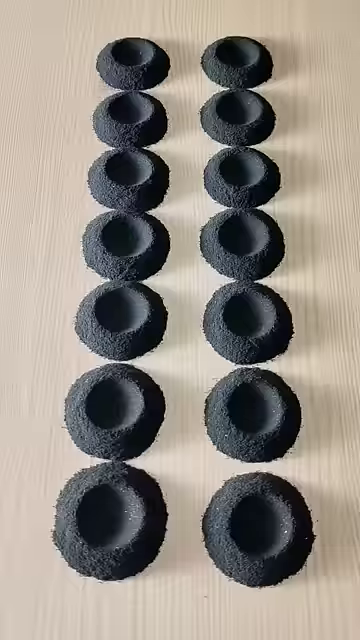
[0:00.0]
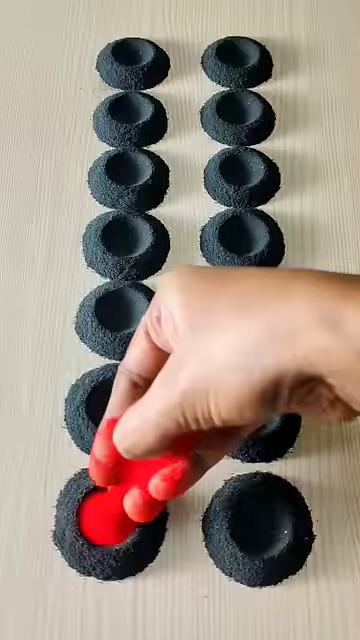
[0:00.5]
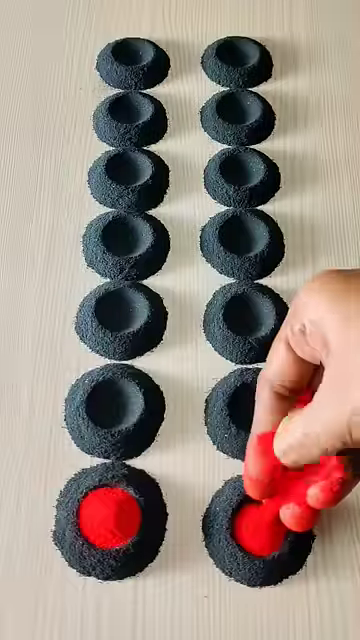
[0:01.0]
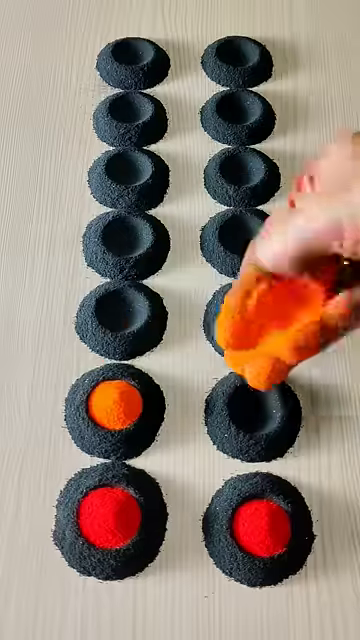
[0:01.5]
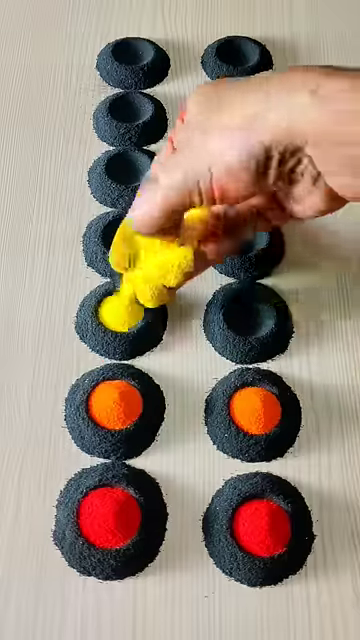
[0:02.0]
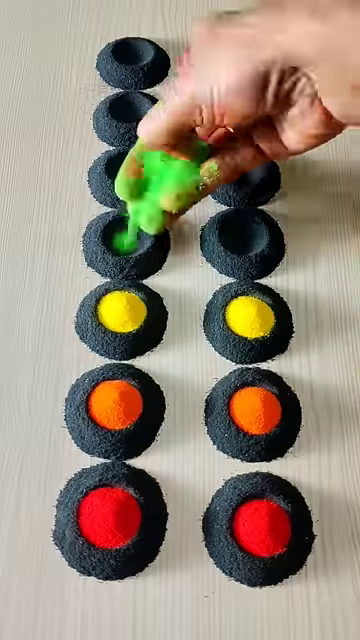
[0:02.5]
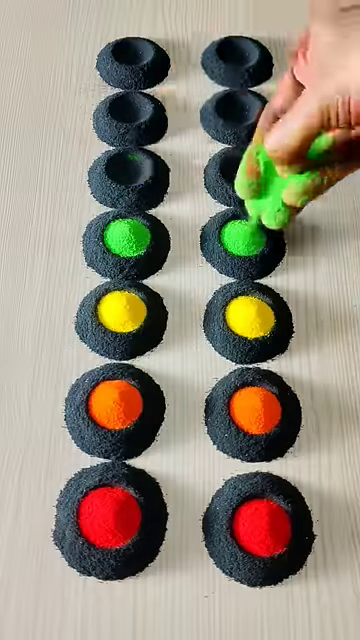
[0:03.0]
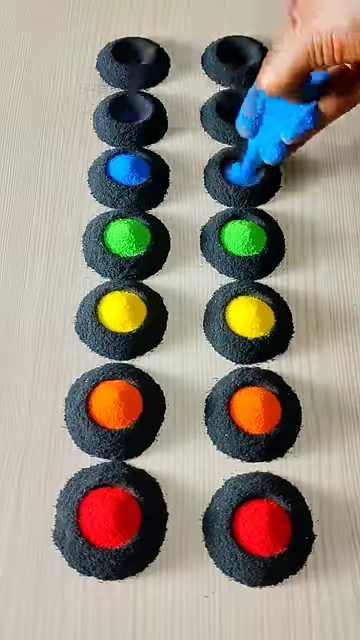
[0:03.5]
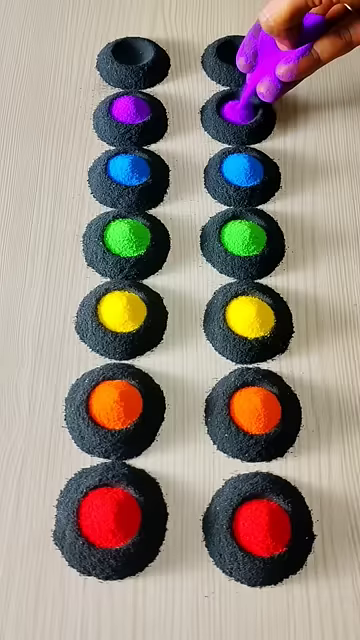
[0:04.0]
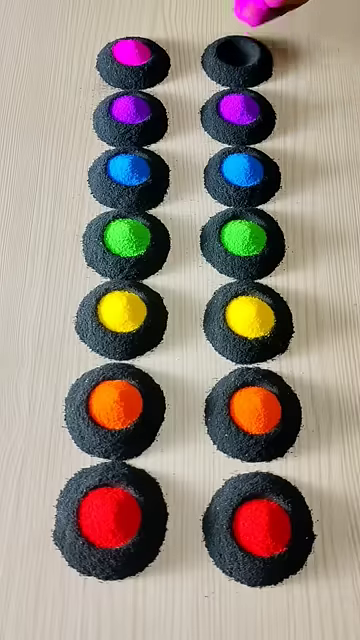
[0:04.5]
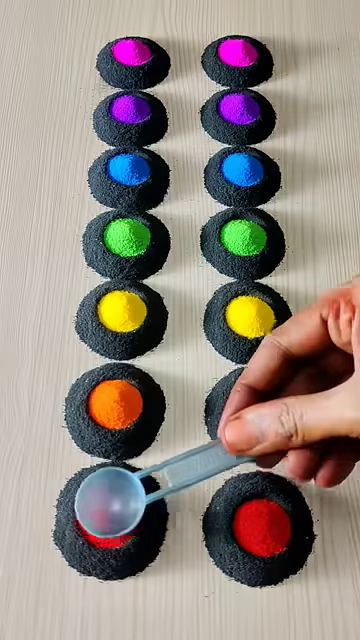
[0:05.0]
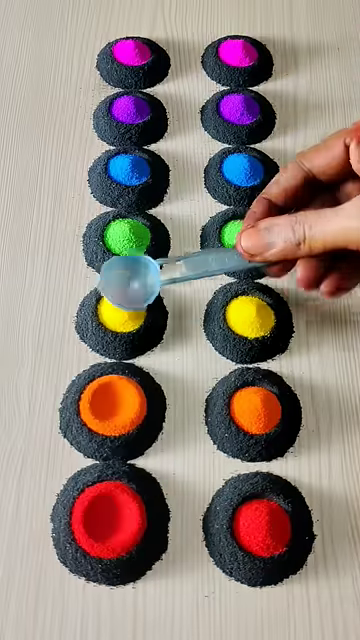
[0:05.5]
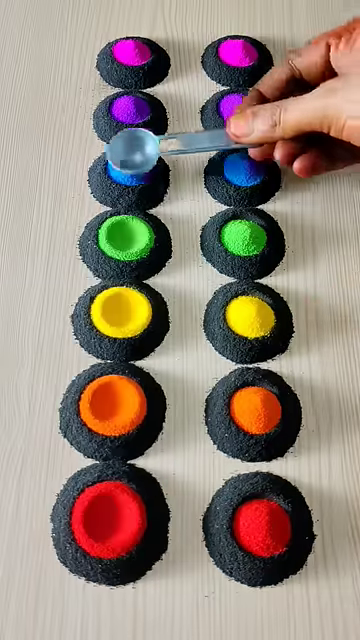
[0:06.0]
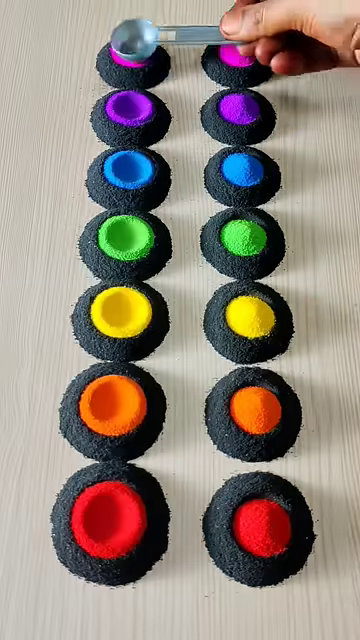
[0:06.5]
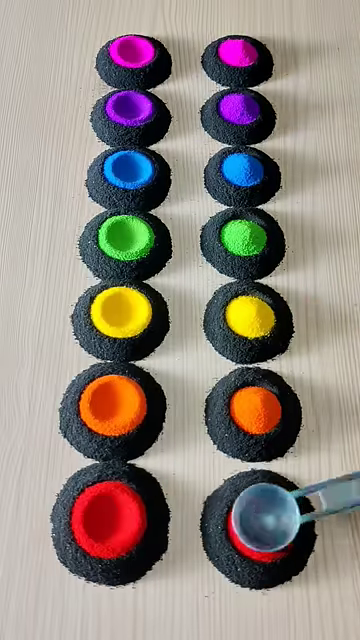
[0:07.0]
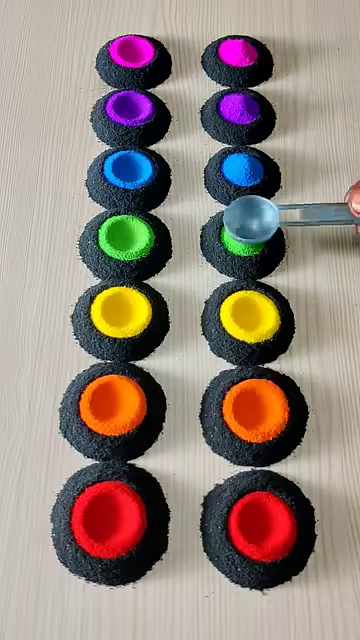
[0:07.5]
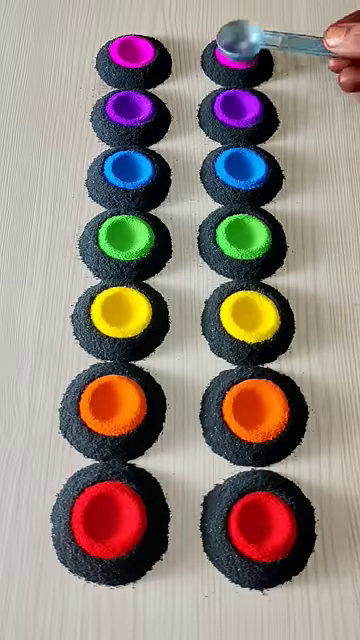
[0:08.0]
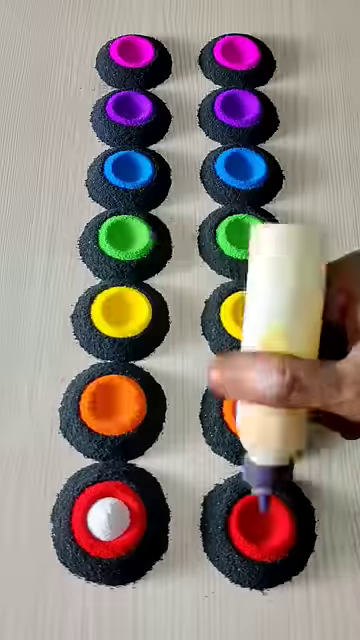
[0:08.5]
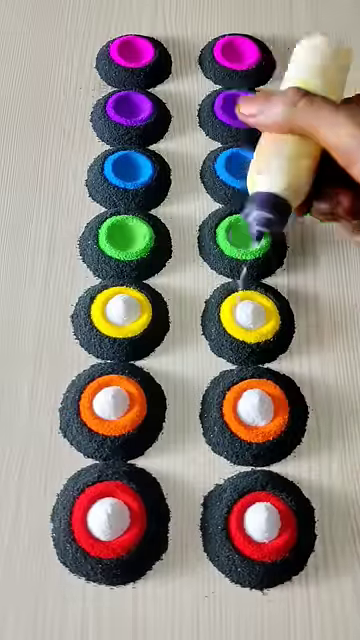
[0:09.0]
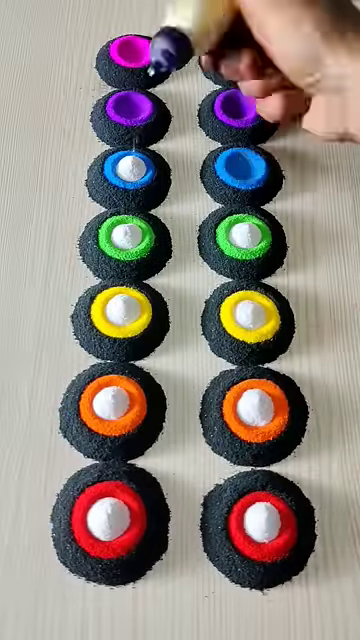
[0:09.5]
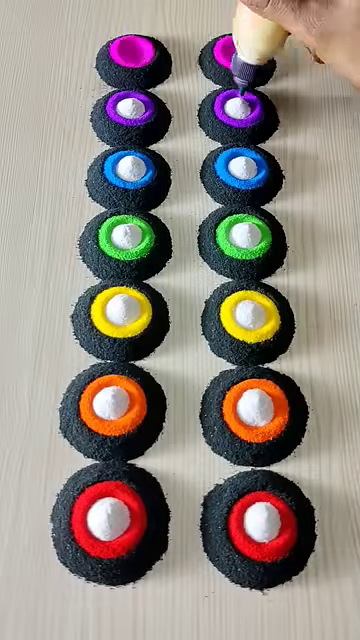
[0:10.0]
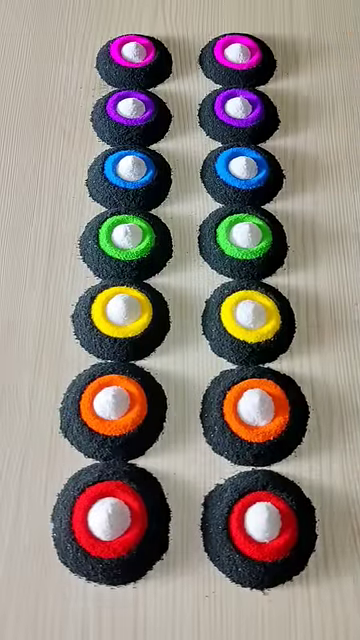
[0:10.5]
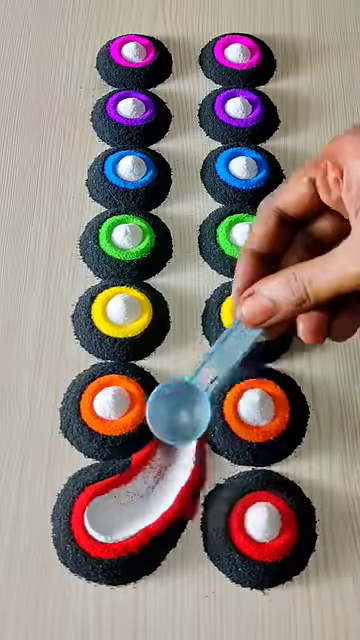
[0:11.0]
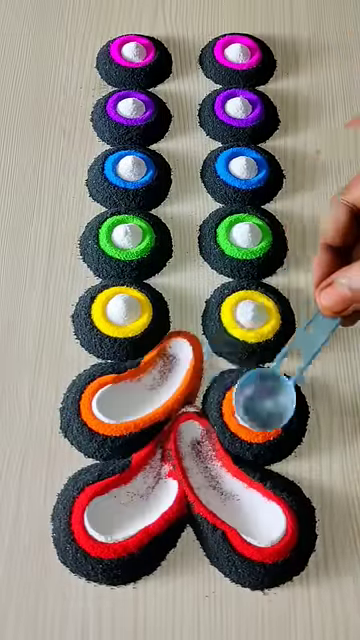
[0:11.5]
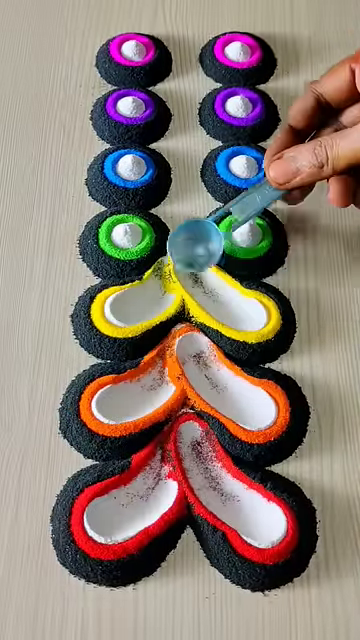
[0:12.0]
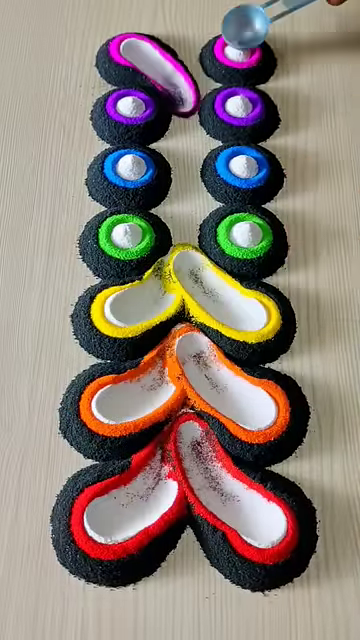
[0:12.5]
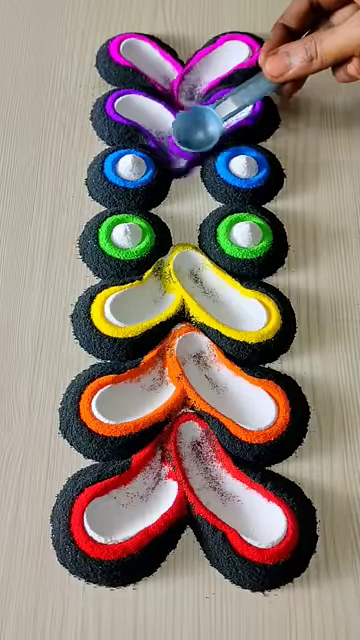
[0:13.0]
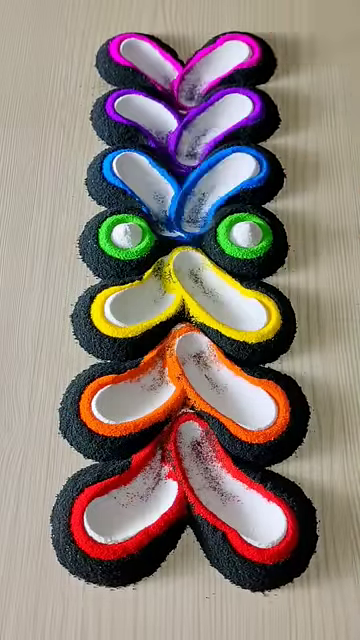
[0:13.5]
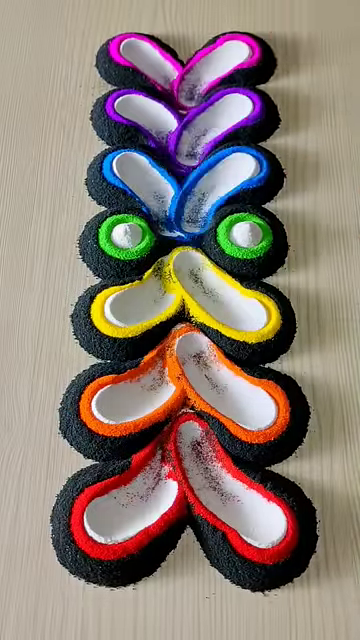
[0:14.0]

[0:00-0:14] Two rows of black mounds with dents in the center are on a pale wooden table, seven in each row for a total of 14 mounds. A hand comes into frame with a small bag and squeezes what appears to be sand into the center of each black circle, with the two across from each other having the same color: red, orange, yellow, green, blue, purple, and pink sand, all the way back on both sides. The hand then takes a measuring scoop and makes an indent in the top center of each individual mound of dirt; the footage speeds up for this motion. The hand comes back into frame with a squeeze bottle and dispenses white sand into the center of each indent. It then pulls back, the bottle is gone, and the hand uses the measuring spoon to spread out each circle toward the center, stopping on the center two green circles to make a pattern on the wood below.